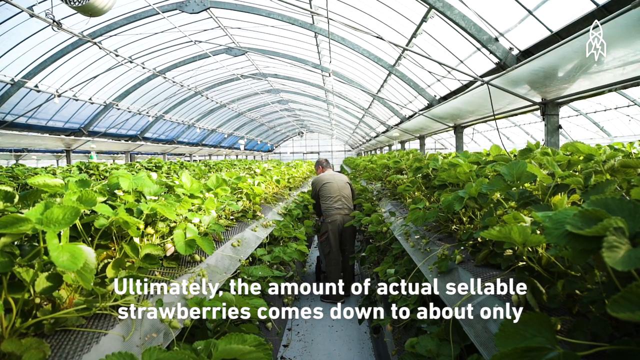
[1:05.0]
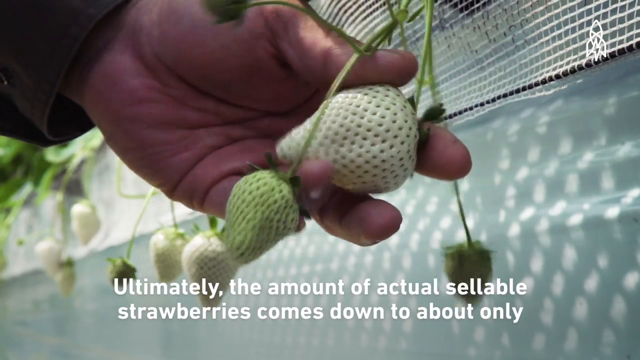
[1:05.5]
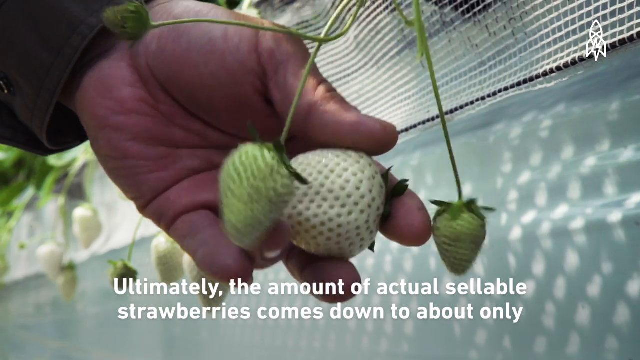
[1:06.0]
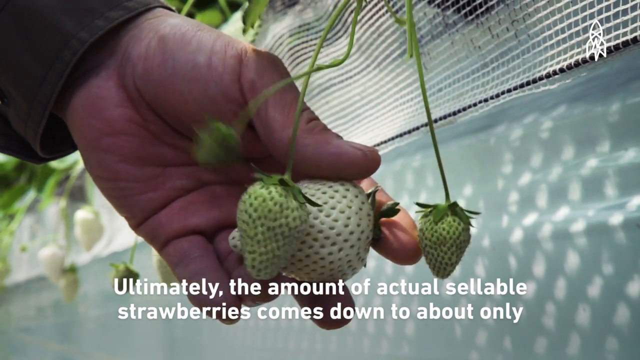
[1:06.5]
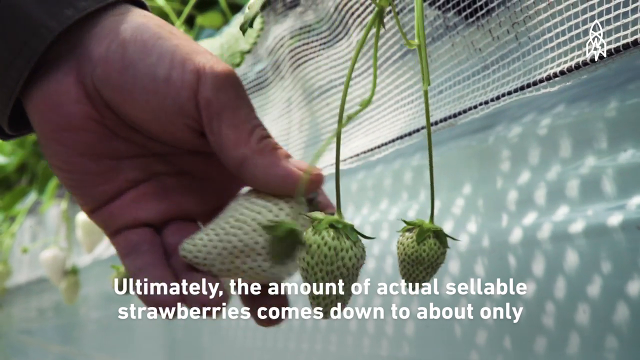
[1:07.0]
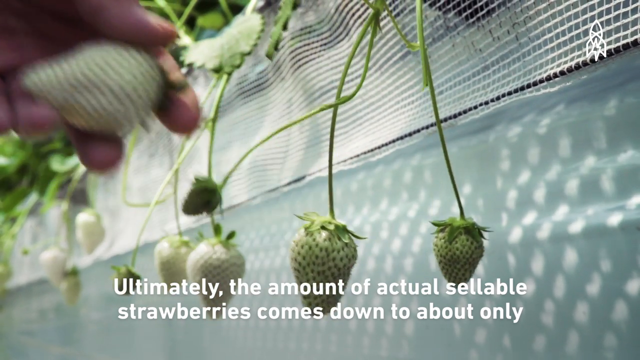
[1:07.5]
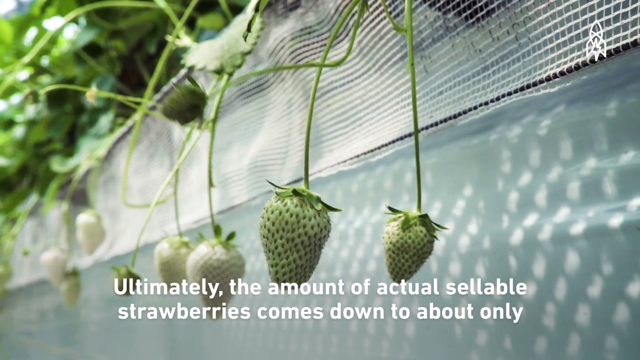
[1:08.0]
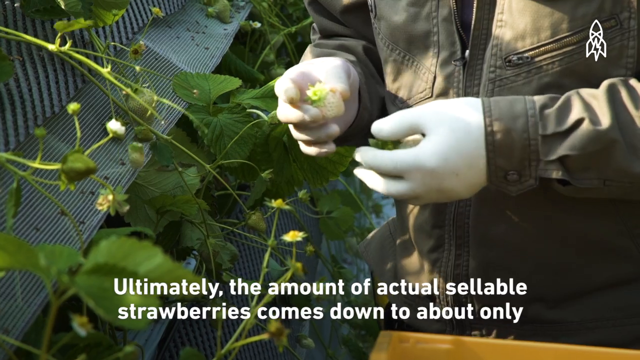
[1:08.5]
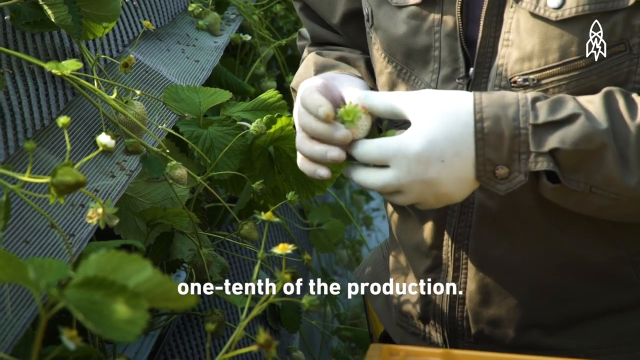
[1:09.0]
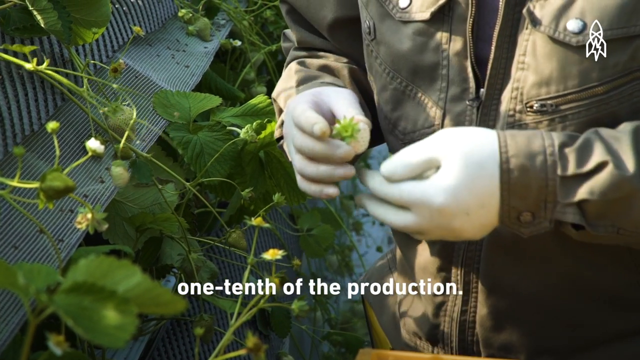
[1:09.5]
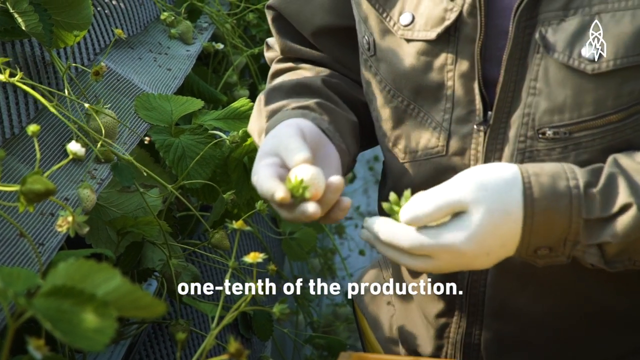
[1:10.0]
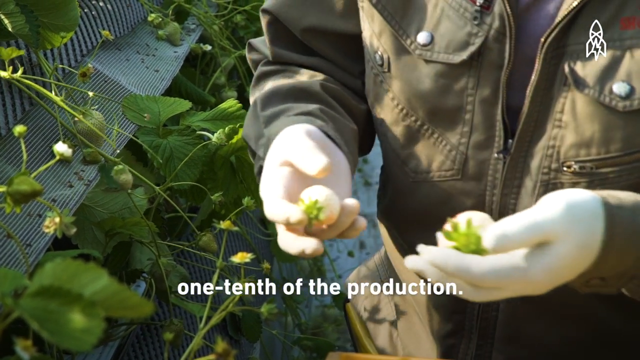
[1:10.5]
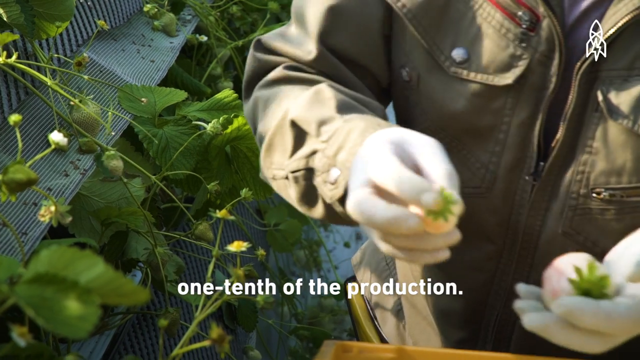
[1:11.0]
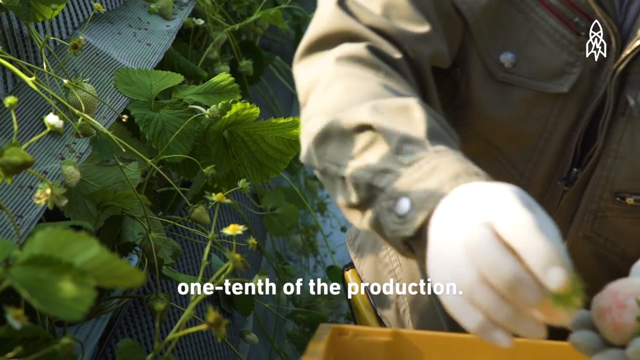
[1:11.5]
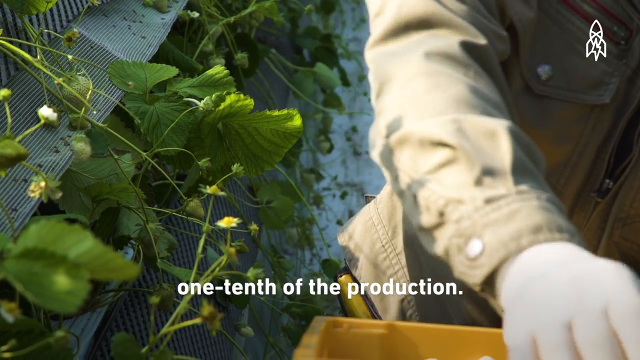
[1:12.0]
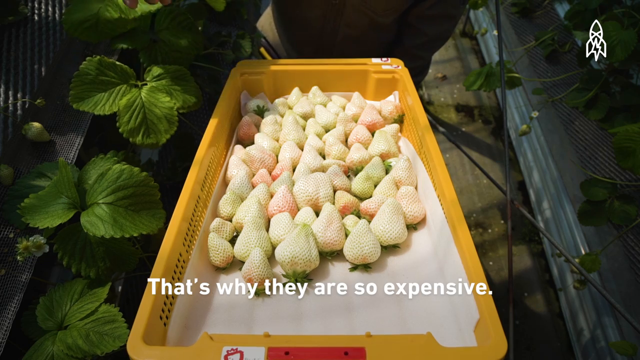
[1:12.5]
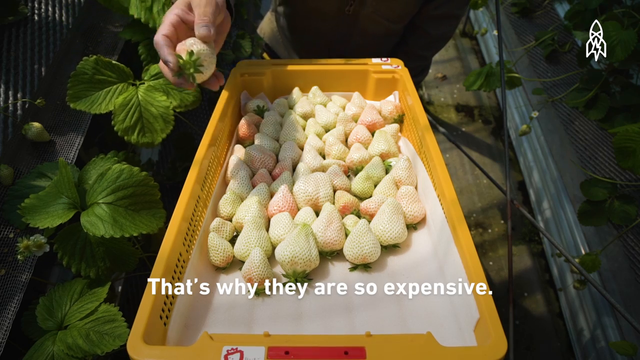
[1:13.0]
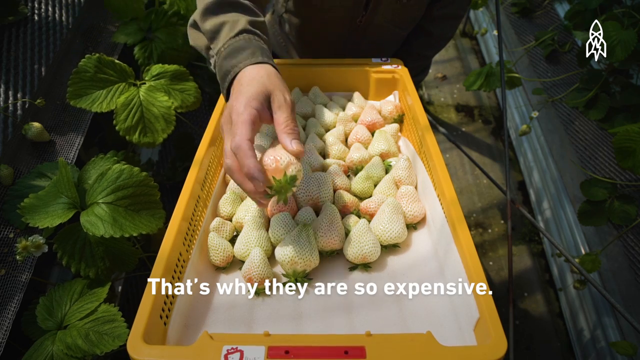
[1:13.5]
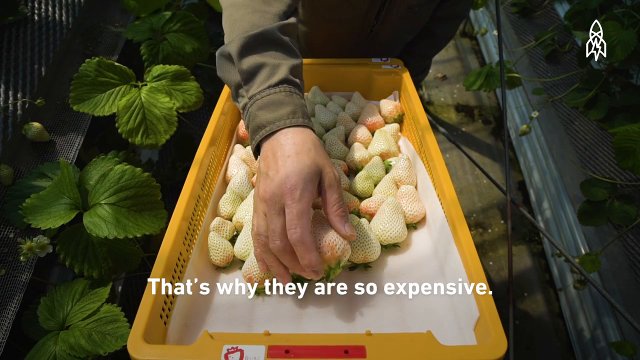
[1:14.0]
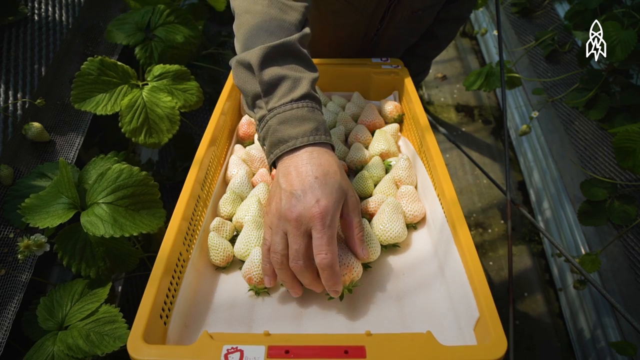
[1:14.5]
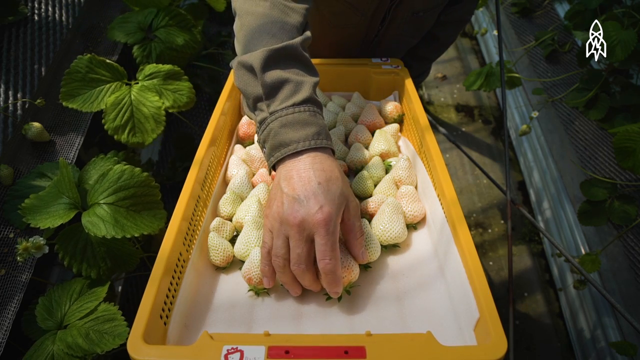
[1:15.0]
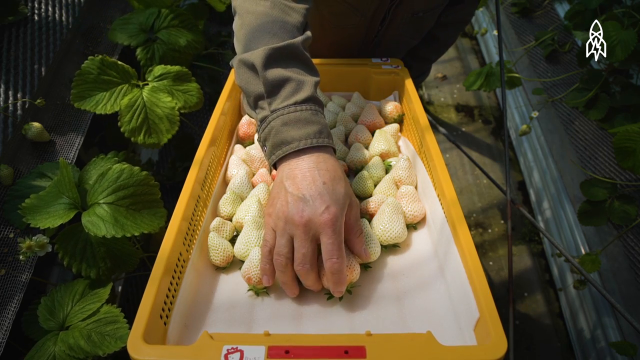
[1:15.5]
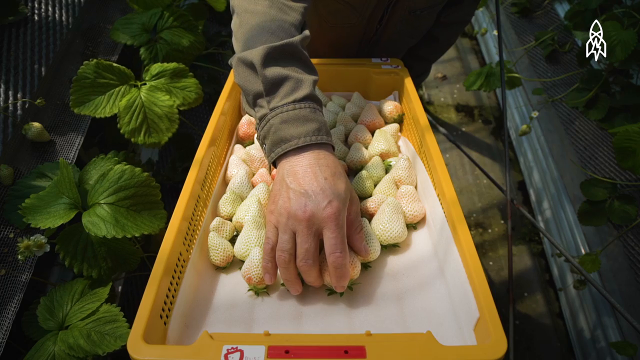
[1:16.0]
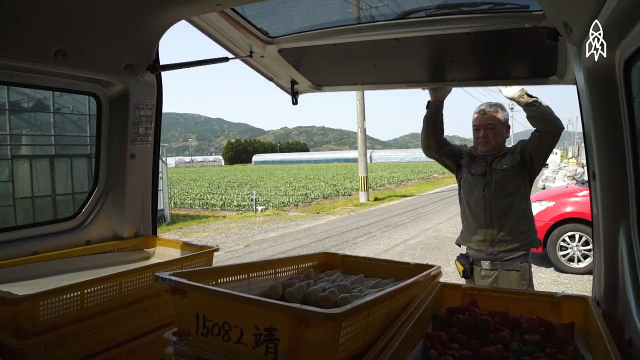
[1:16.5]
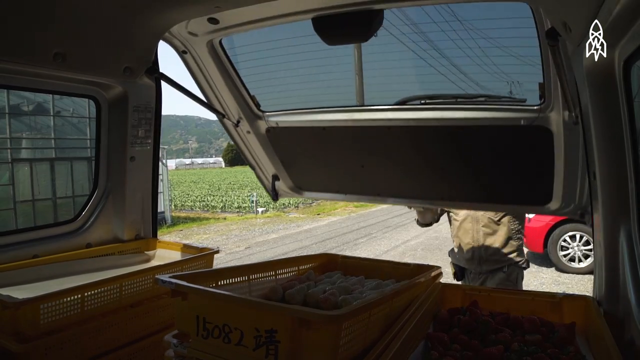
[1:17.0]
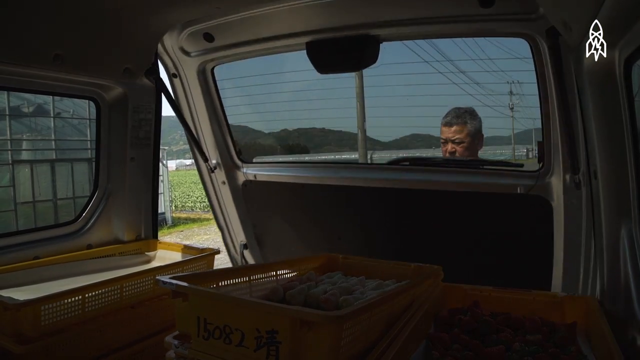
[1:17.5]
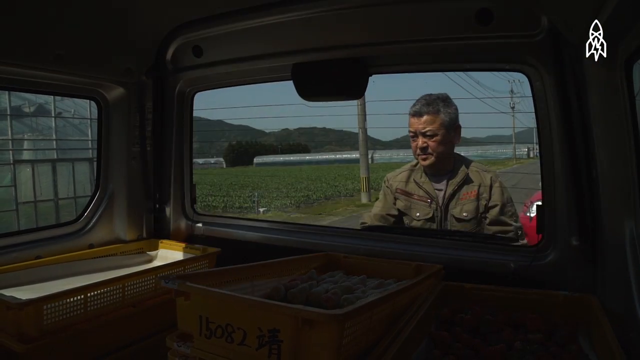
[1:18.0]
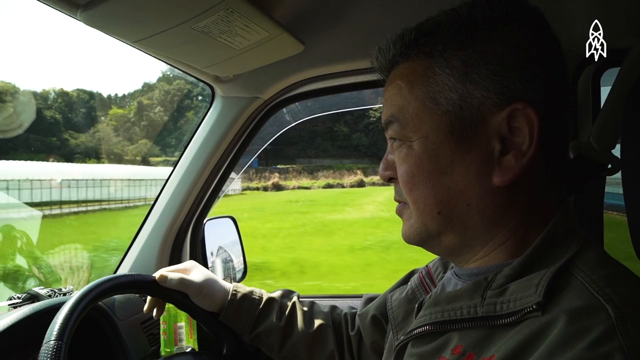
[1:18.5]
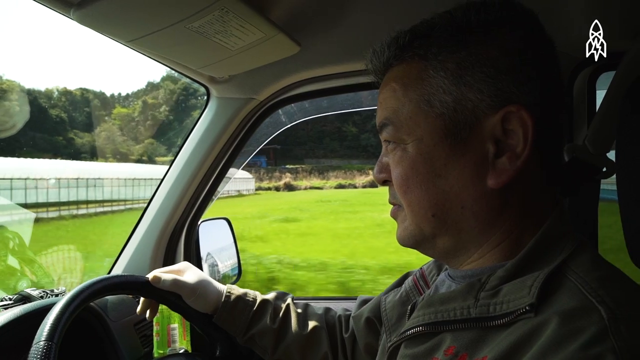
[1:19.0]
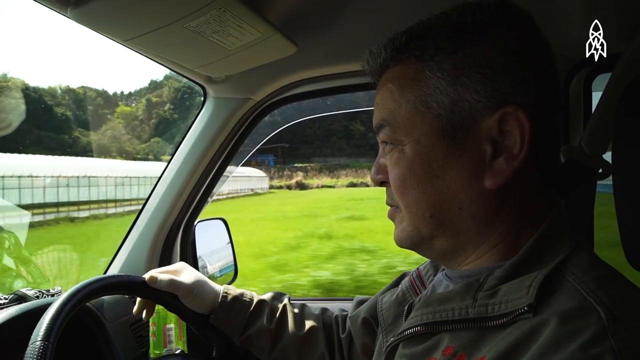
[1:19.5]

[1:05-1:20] Mr. Tashima, still in the brown gardening outfit and white latex gloves, harvests white jewel strawberries and places them into a yellow bin, presumably to be sorted, cleaned and sold. He drives what looks like a pickup truck and shuts the trunk, which is full of white jewel strawberries. He appears to be in a rural region of Japan.